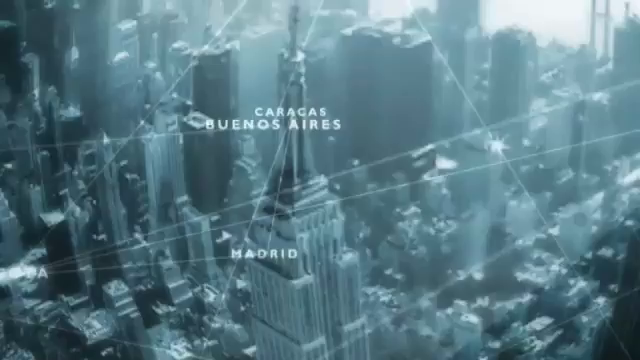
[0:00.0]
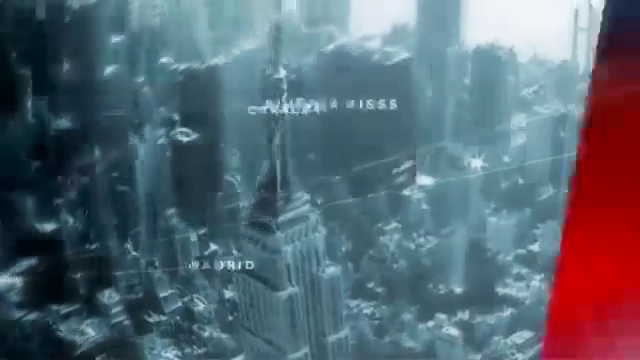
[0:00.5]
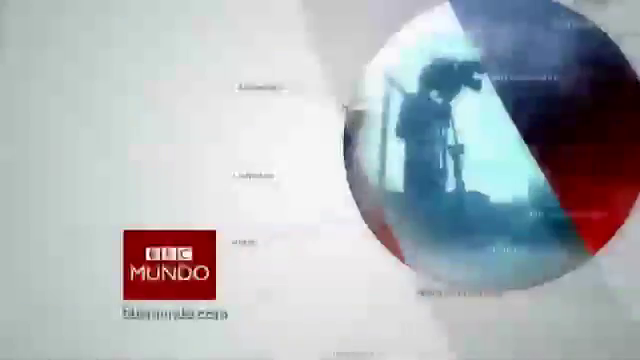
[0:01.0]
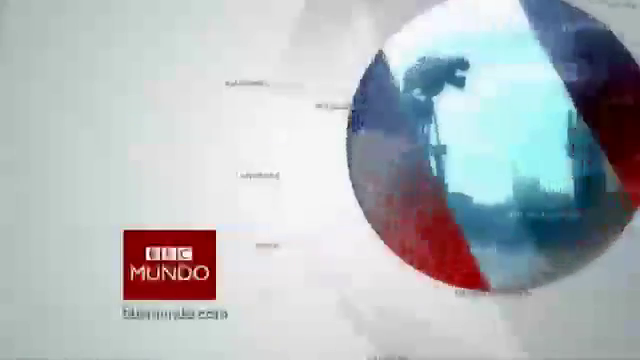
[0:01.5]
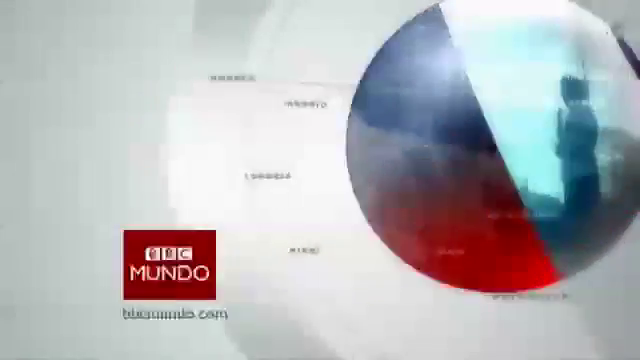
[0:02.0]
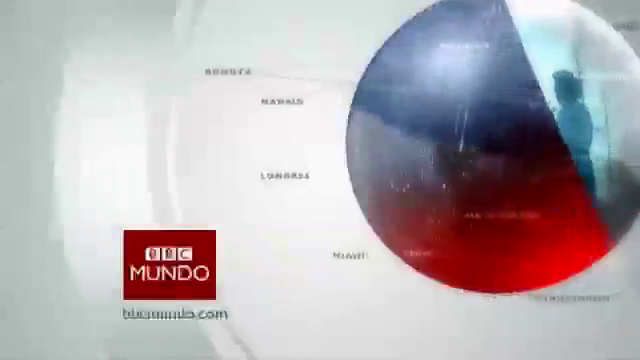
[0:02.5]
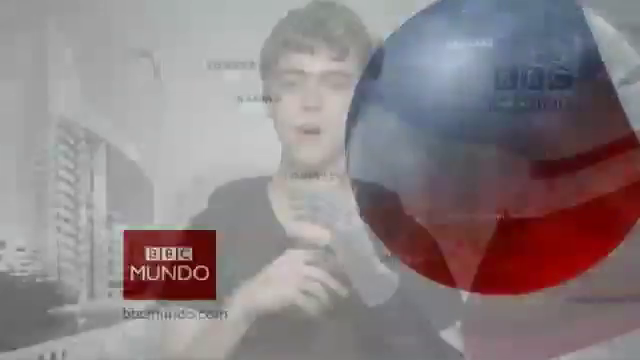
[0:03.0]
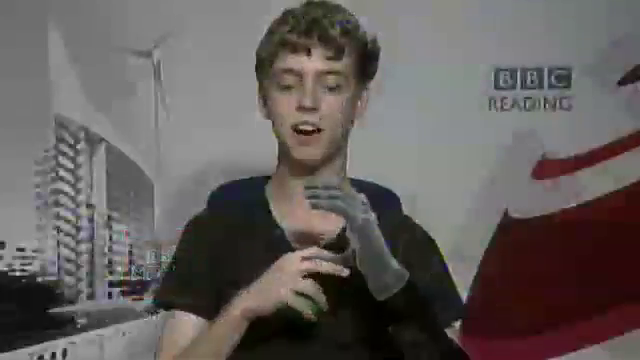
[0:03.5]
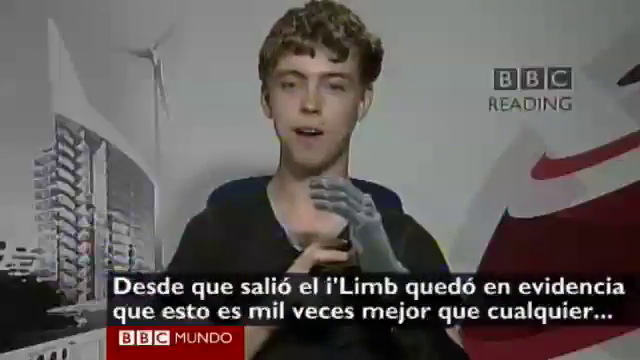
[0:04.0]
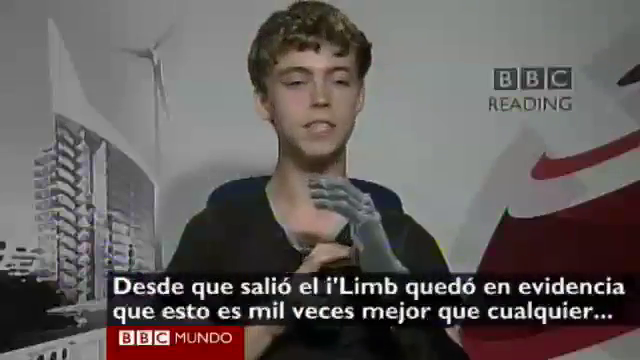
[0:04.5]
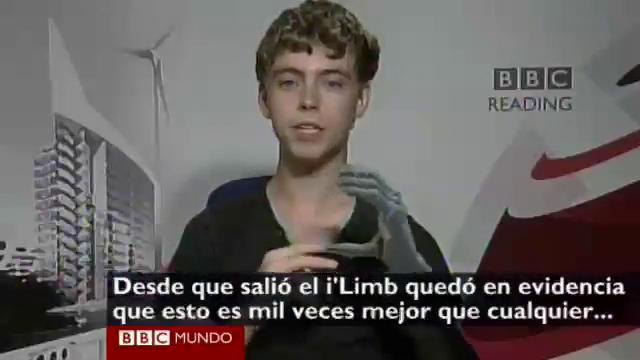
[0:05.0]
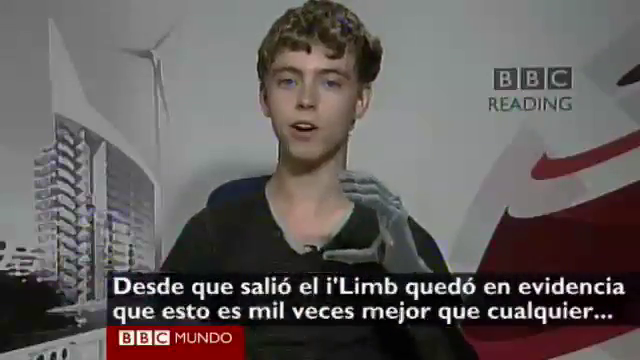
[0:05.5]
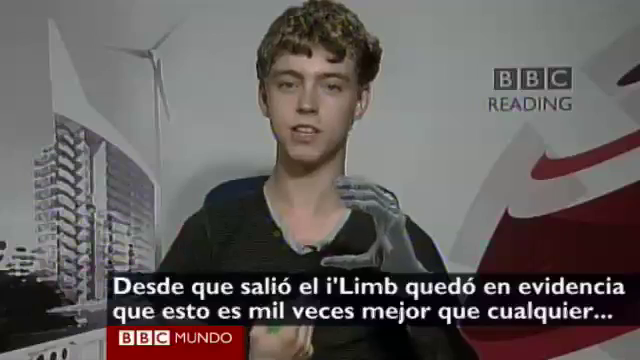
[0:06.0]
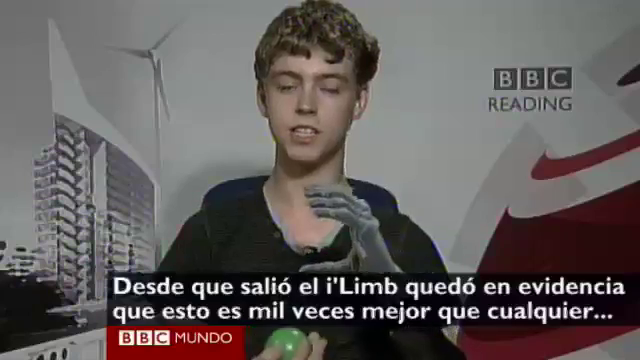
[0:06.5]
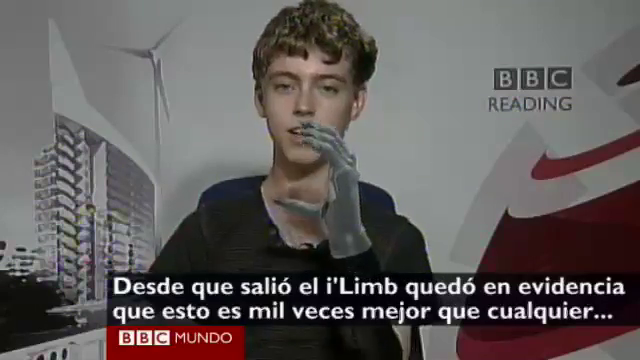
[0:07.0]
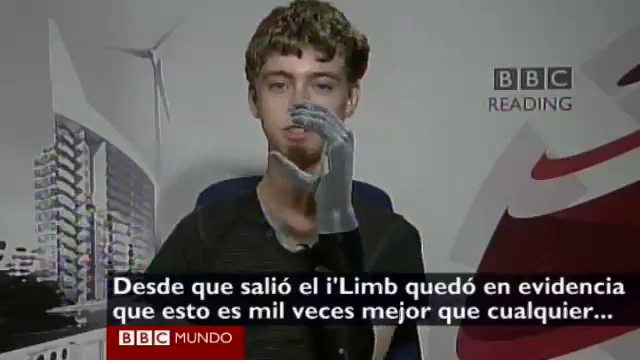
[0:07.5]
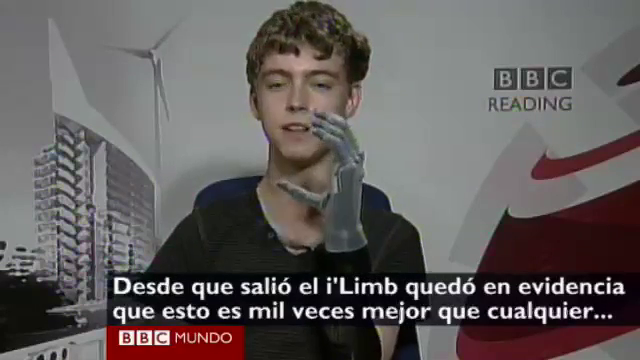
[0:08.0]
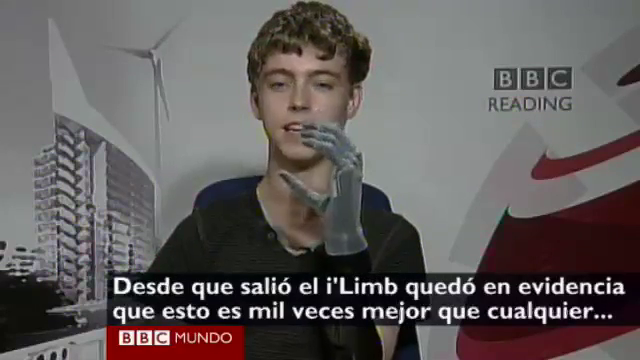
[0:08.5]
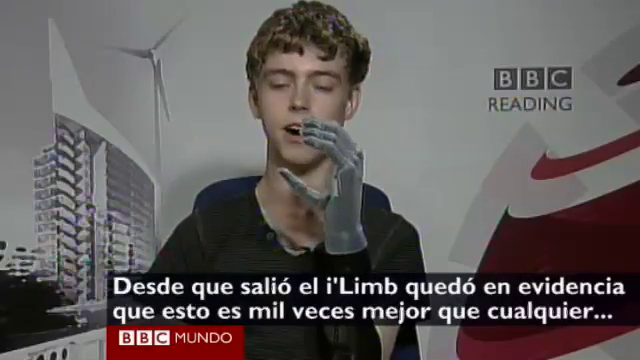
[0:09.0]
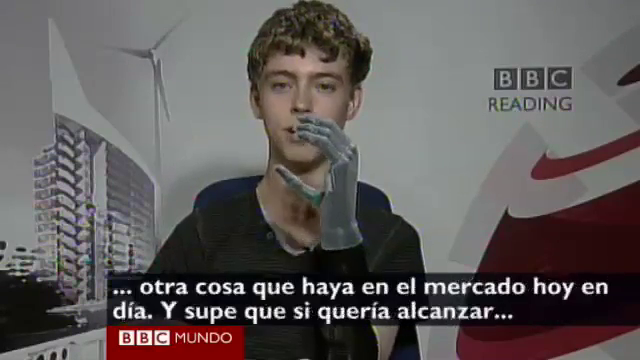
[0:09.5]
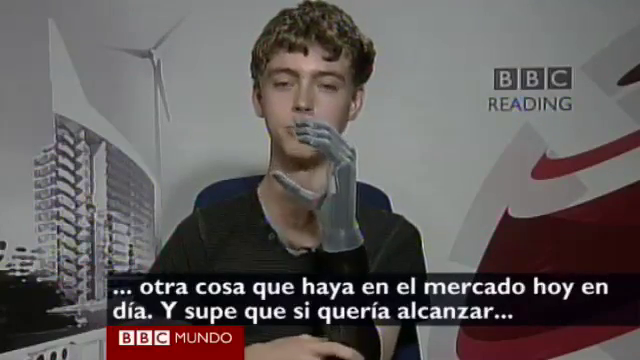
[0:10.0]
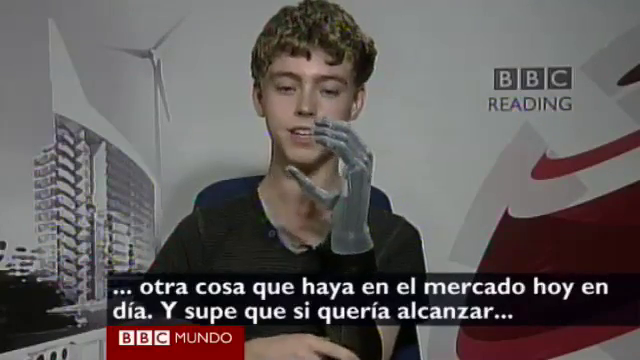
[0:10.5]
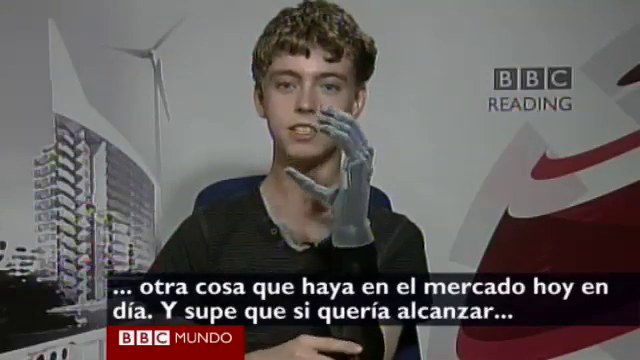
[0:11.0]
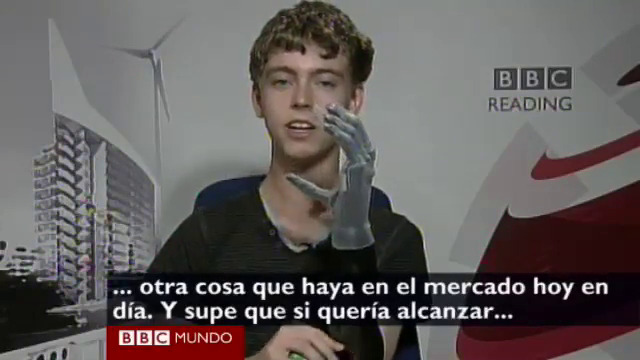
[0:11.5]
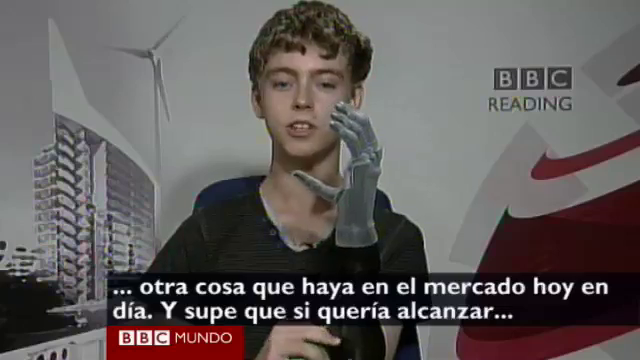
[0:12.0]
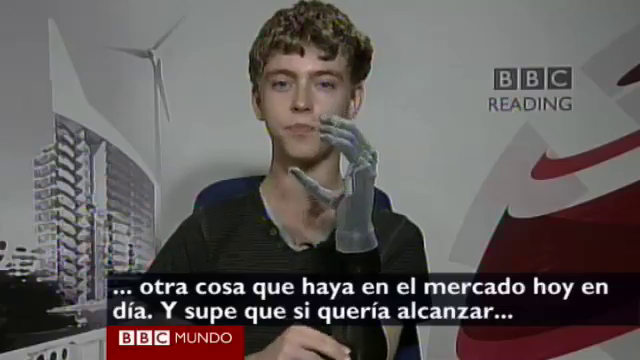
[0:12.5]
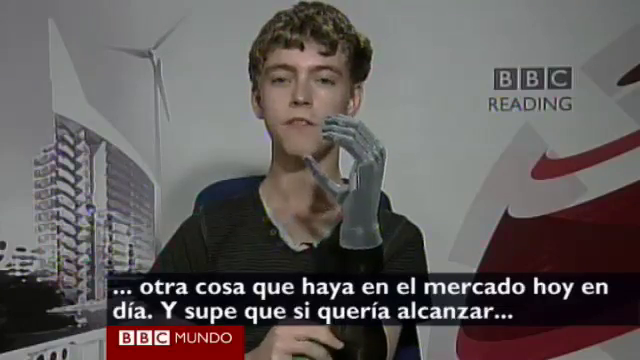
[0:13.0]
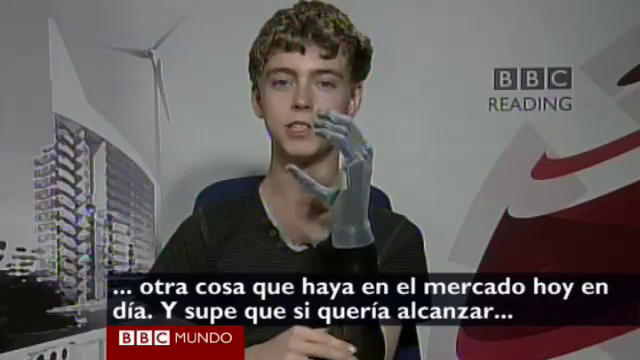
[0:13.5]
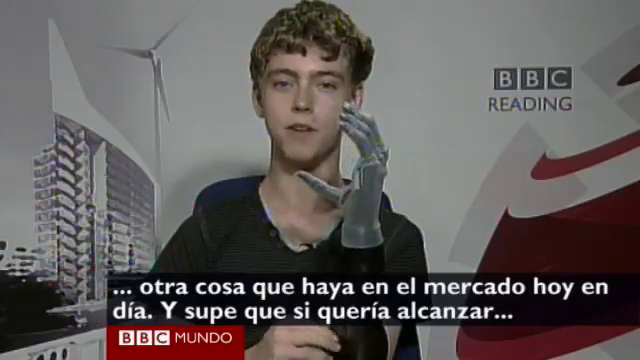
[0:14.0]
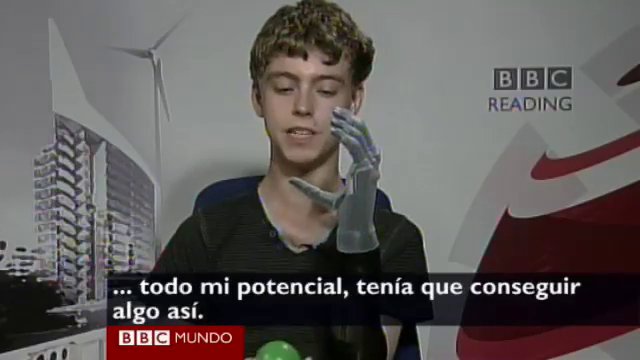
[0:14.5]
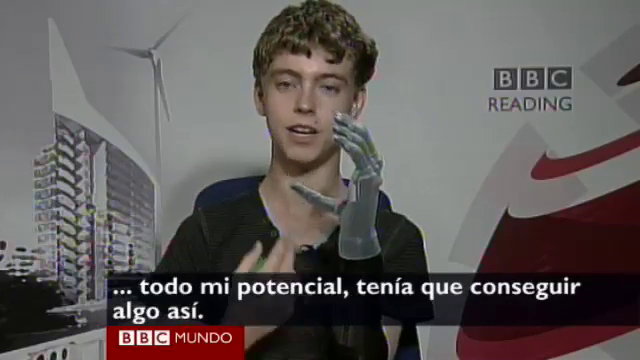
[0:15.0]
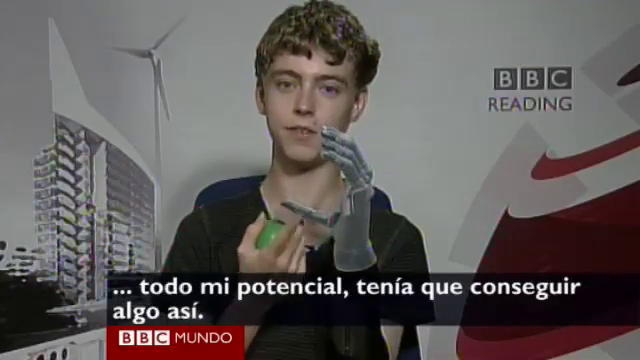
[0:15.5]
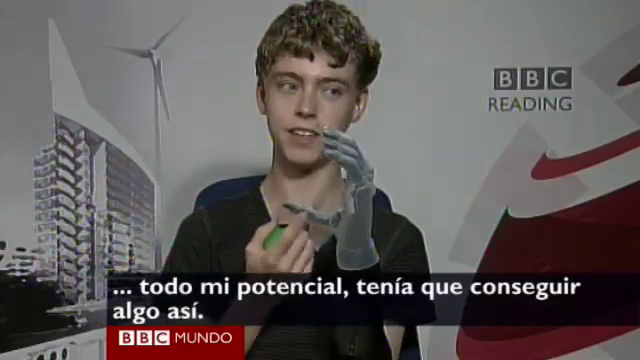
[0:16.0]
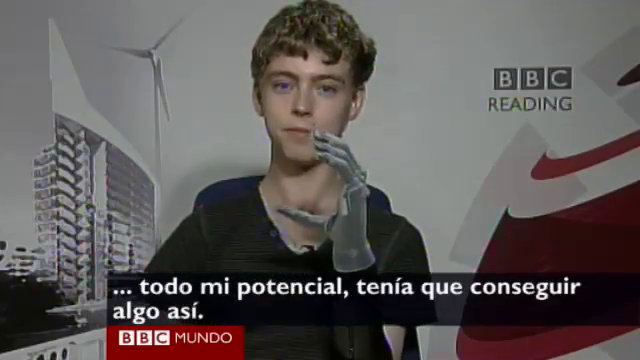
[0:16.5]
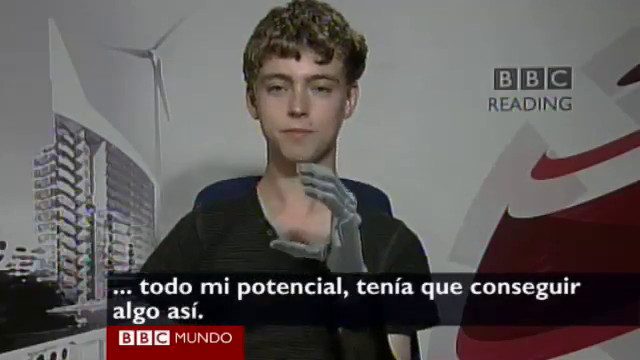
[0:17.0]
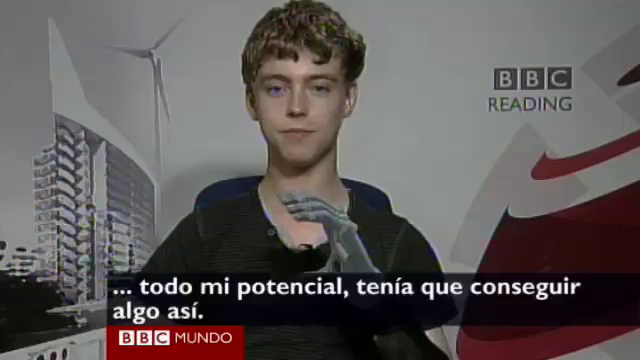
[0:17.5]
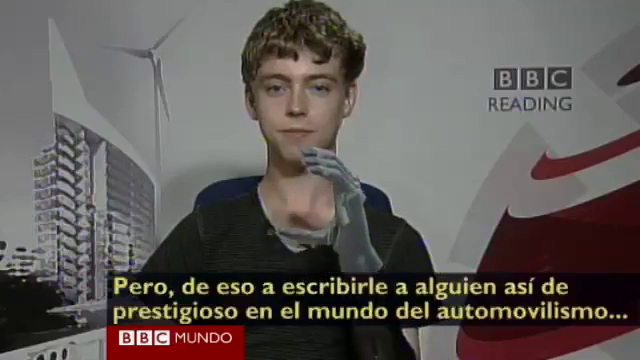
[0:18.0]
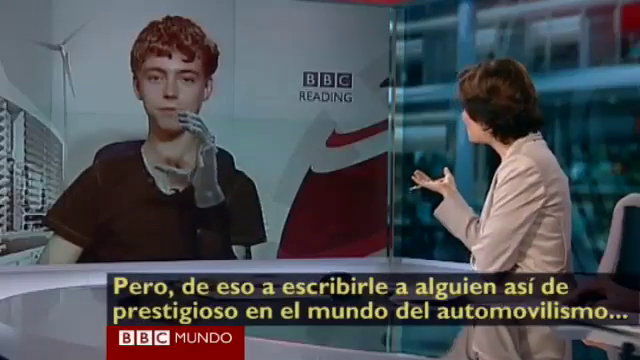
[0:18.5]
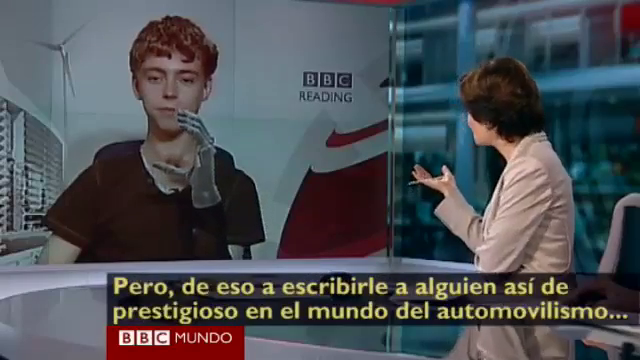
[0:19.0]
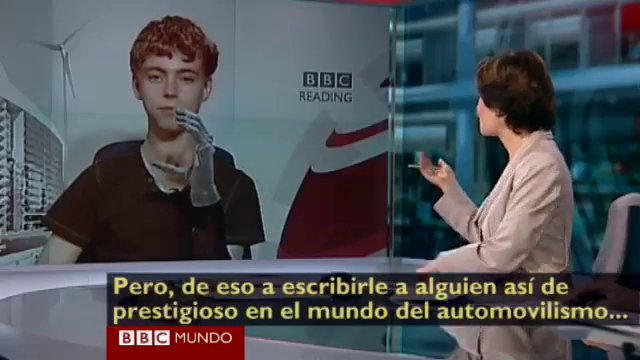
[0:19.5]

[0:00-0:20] The video opens on a blurred, somewhat white cityscape with mostly gray and blue buildings, possibly because of the lighting. On-screen text reads "Caracas," "Buenos Aires" and "Madrid," with lines connecting various points, and the names move around. The cityscape is replaced by a white backdrop with a silver and red sphere containing a picture of some kind of structure. In the lower left area of the screen, a red box holds white text reading "BBC Mundo," so this apparently is BBC World News. The scene cuts to a backdrop where a building and part of a red and white logo are visible, with a sign reading "BBC Reading" in the upper right. A white male with curly, auburn hair appears, with a white caption beneath him that is not in English and a BBC Mundo logo in the bottom left. One of his hands is either mechanical or gloved. He holds his left hand up in a sort of C shape, thumb at the bottom and fingers curled up top, and it looks gloved or synthetic. His right hand moves down and off the screen. He raises the left hand, which now does look mechanical, to his mouth and grips a little with it as he talks. He continues talking and the caption changes. The video cuts to a news desk where a woman in a sort of beige top with straight brown hair faces a screen showing him. He is on the left pane of the screen, and the right pane shows something like blue machines.